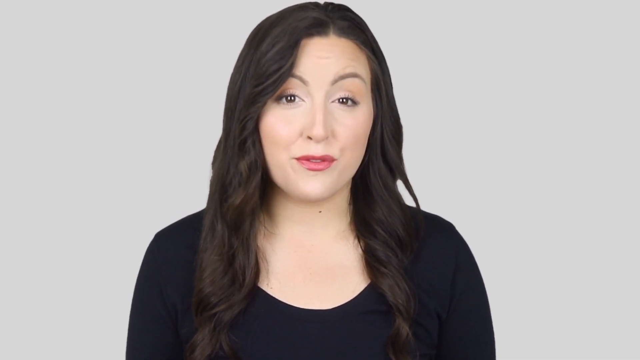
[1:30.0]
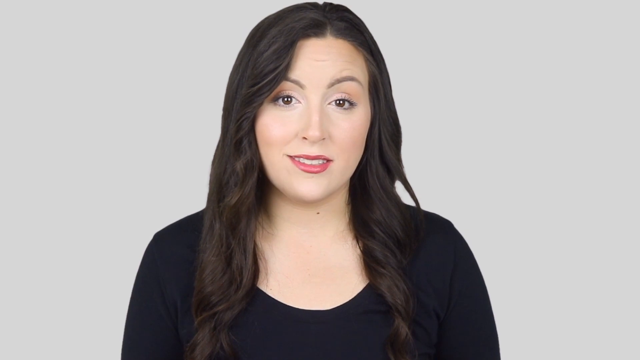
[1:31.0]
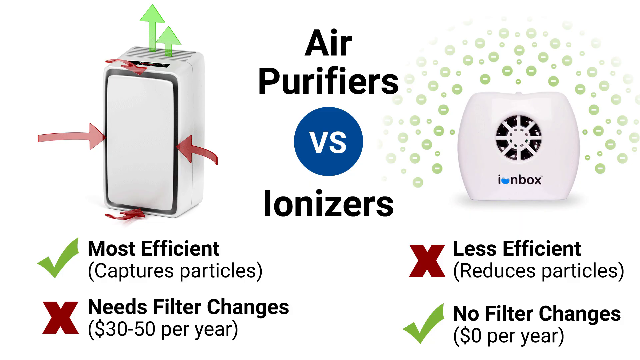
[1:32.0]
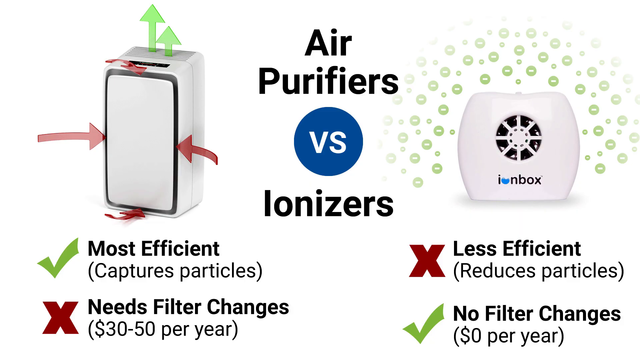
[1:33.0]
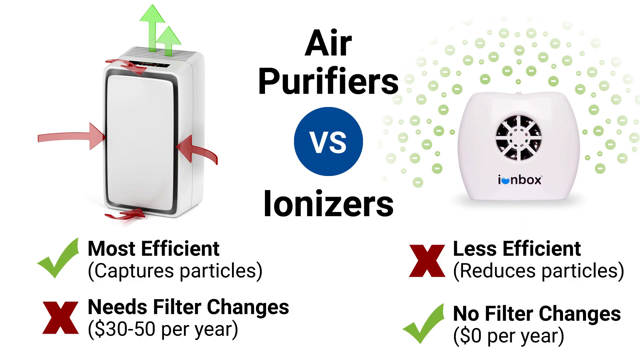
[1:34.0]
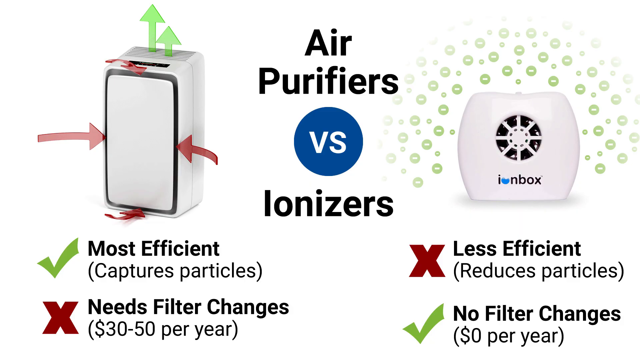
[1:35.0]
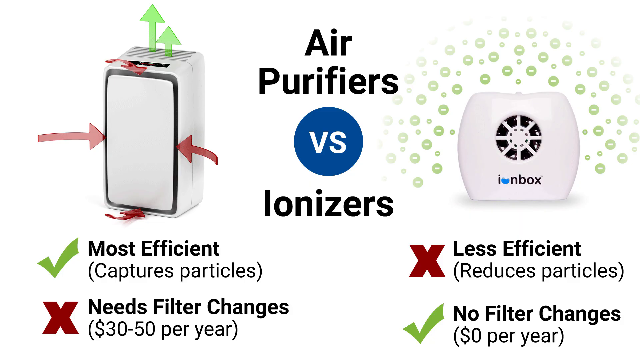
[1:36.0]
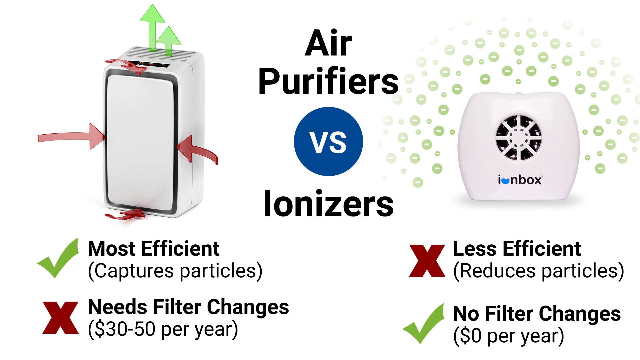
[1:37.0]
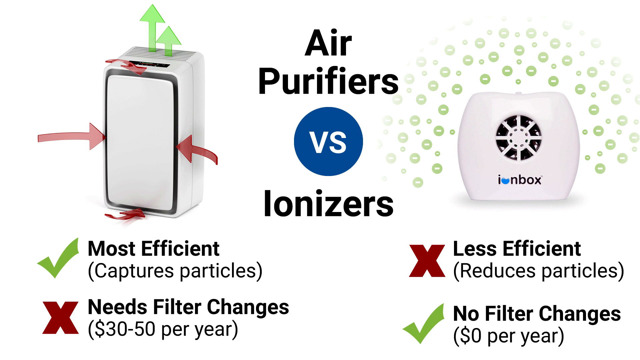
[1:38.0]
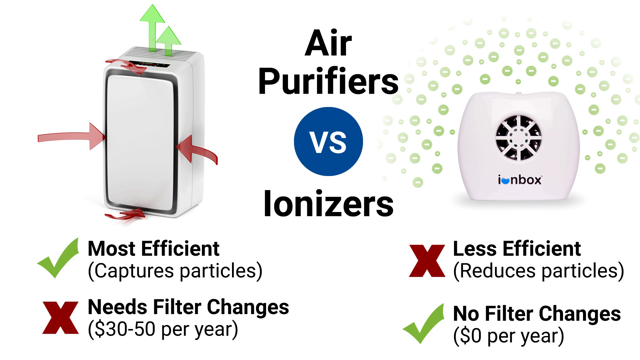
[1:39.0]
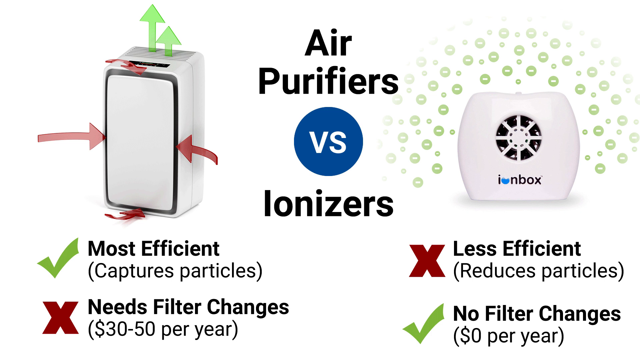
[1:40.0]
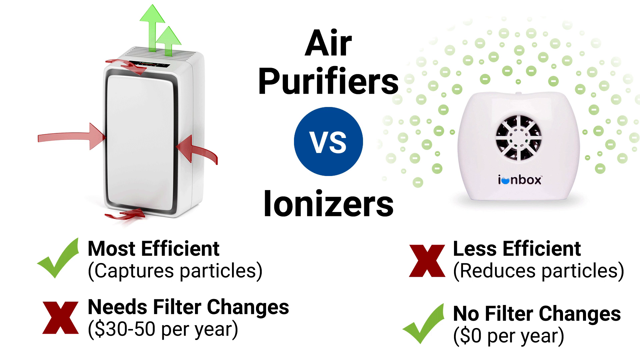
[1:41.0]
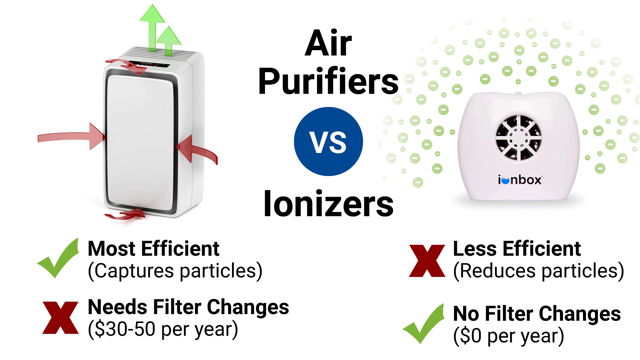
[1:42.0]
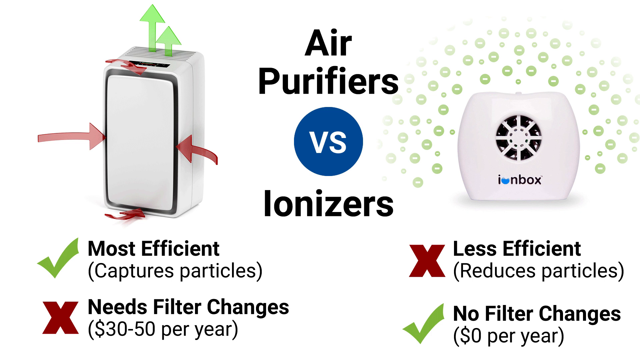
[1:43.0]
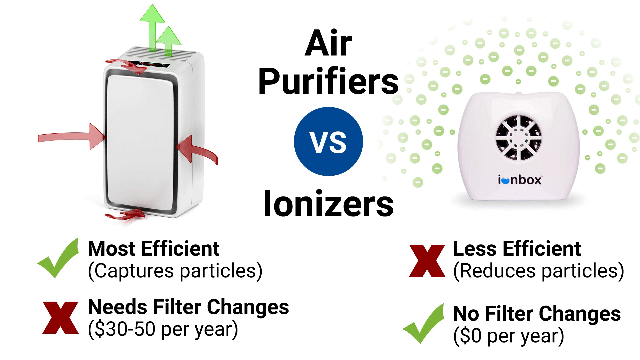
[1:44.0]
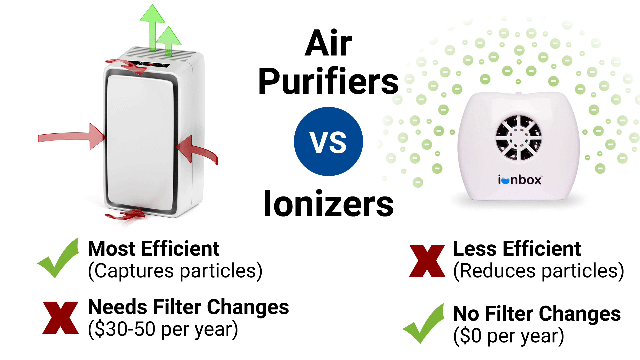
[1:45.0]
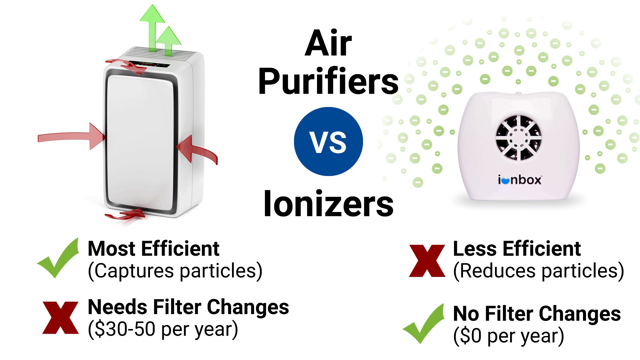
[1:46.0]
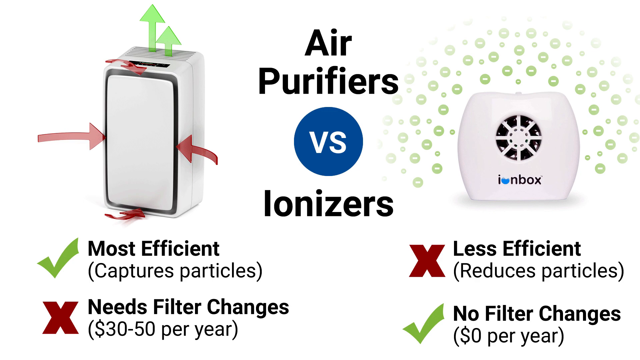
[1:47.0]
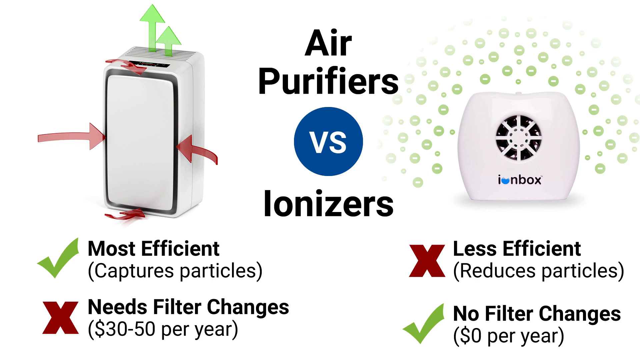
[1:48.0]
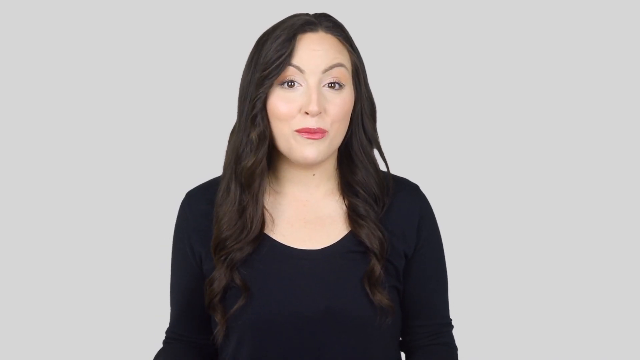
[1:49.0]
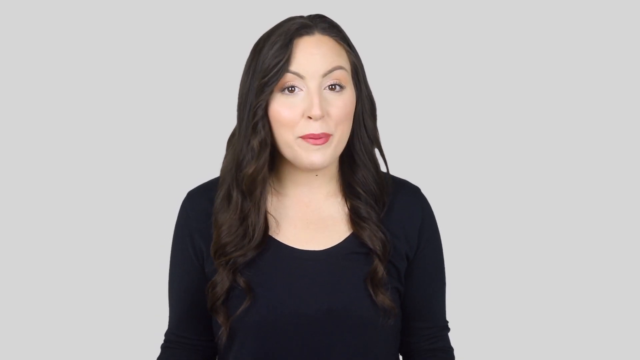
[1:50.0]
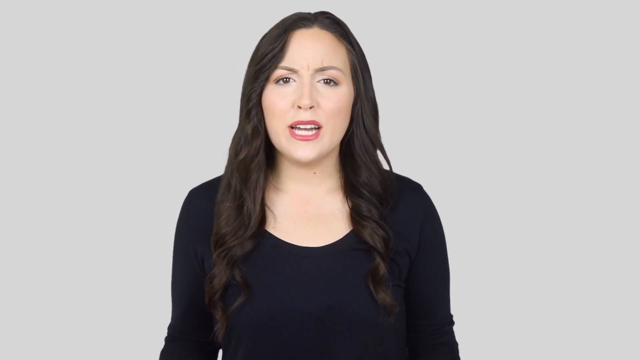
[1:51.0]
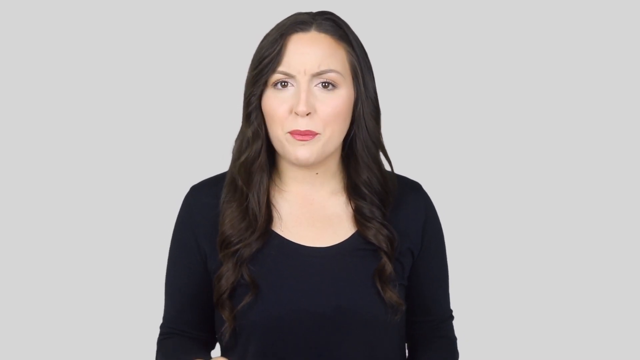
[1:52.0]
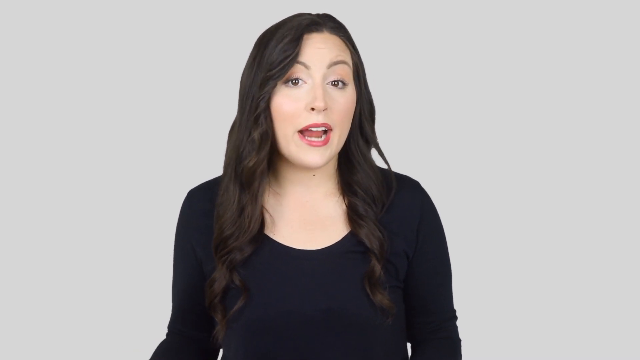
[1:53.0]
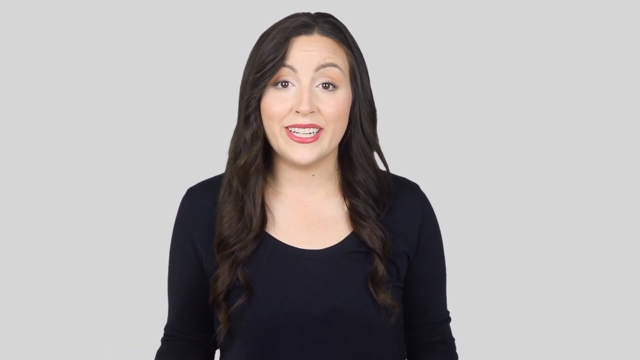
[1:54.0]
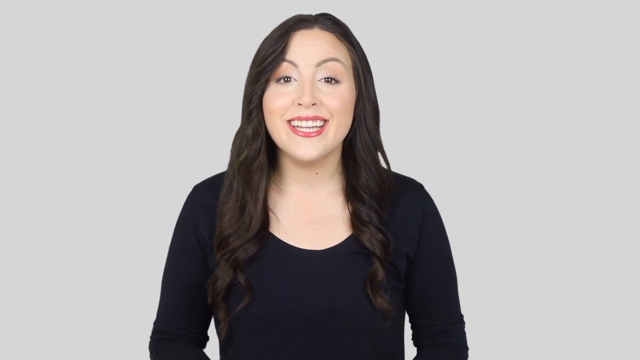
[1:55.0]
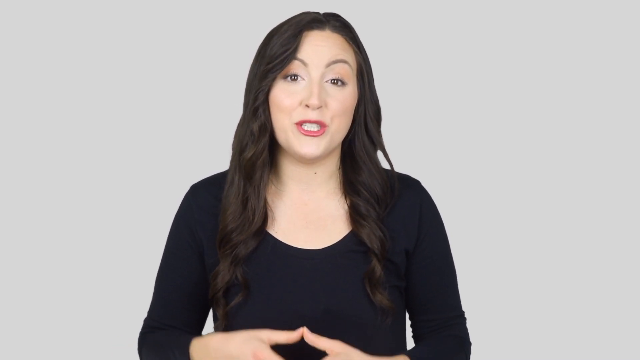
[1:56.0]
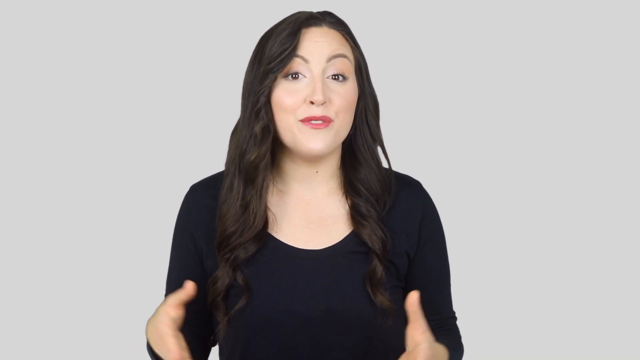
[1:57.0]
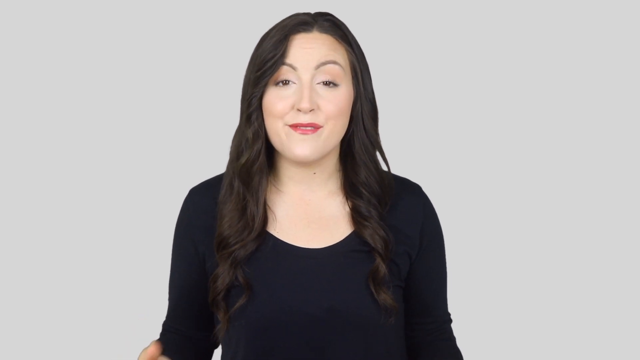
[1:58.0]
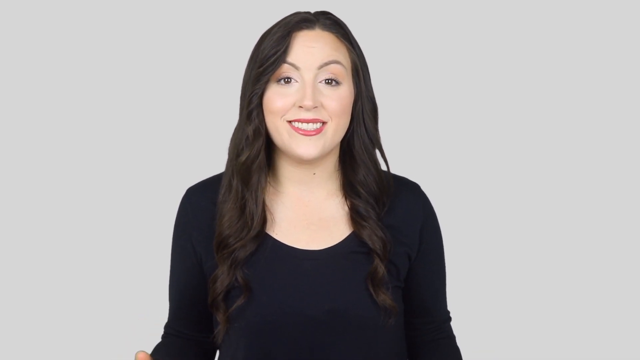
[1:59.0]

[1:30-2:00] A close-up shows a woman in a long-sleeve black shirt with long, dark brown hair somewhat curled at the ends and minimal makeup, just a little eyeshadow and dark pink lipstick, speaking to the camera for a second. The screen then changes to a white background with the text "air purifiers versus ionizers" in the middle. On the left is a picture of a tall, white, rectangular air purifier with green arrows coming out of the top and red arrows pointing to its sides, top and bottom. Below it, black text reads "Most efficient (captures particles)" with a green checkmark to its left, and below that "Needs filter changes ($30 to $50 per year)" with a red X to its left. On the right side of the screen is a smaller, square, white air purifier labeled "Ion box", with what seems to be a fan on the front and small green circles with white dashed lines on the background all around it. Beneath it, text reads "less efficient reduces particles" with a red X to the left, and below that "no filter changes ($0 per year)" with a green check mark next to it. The video returns to the woman with long dark brown hair and the black shirt as she continues speaking to the camera. She raises her eyebrows very high, then somewhat scrunches them together, looking a bit more concerned, before raising them high again with a large smile. She holds up her hands in front of her, to the left and right sides, then puts them back down.